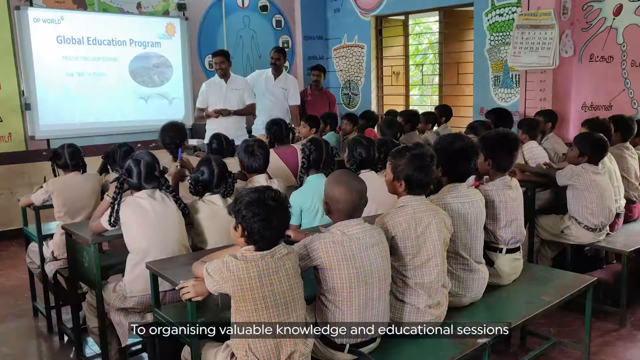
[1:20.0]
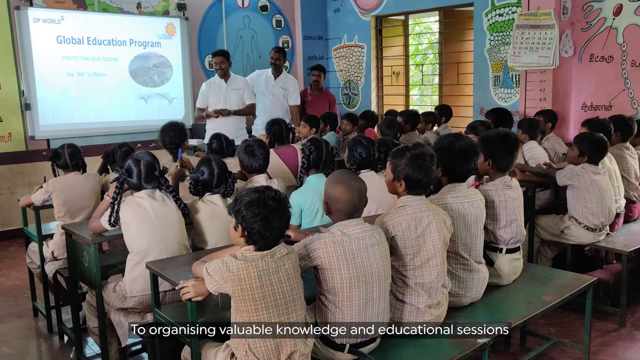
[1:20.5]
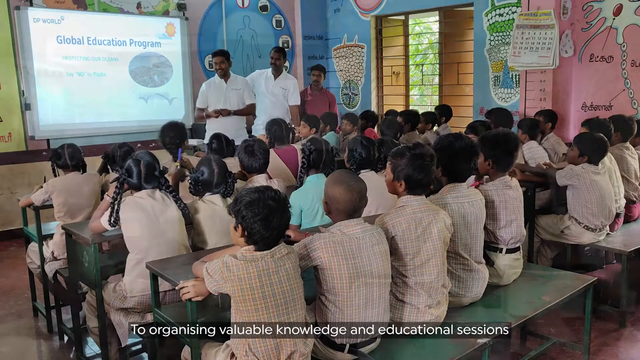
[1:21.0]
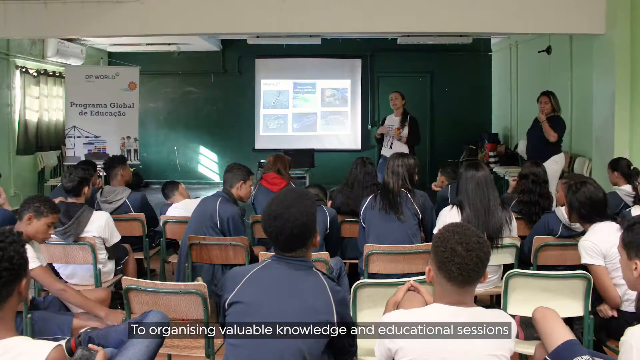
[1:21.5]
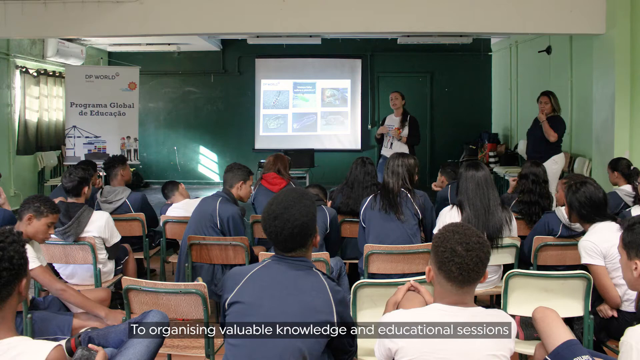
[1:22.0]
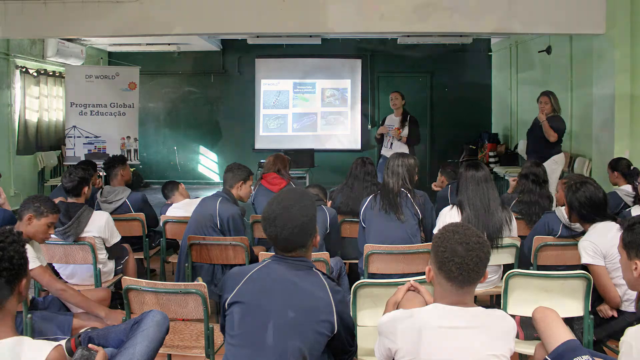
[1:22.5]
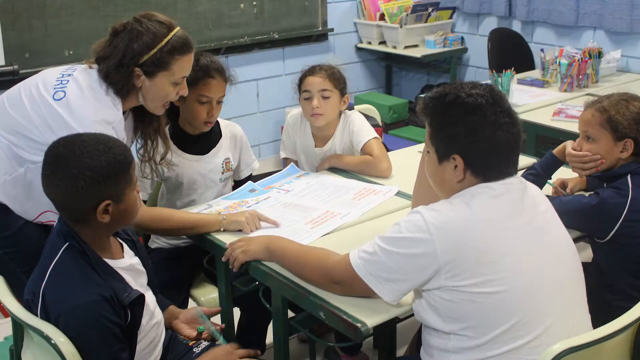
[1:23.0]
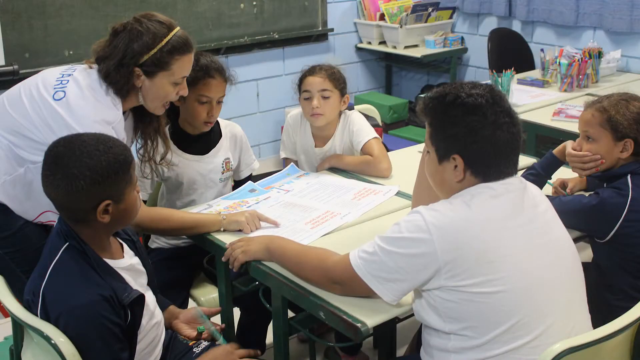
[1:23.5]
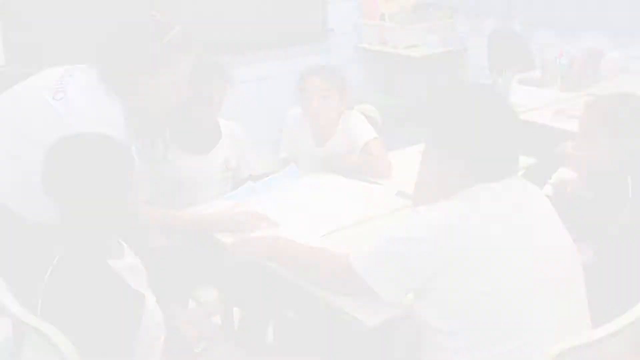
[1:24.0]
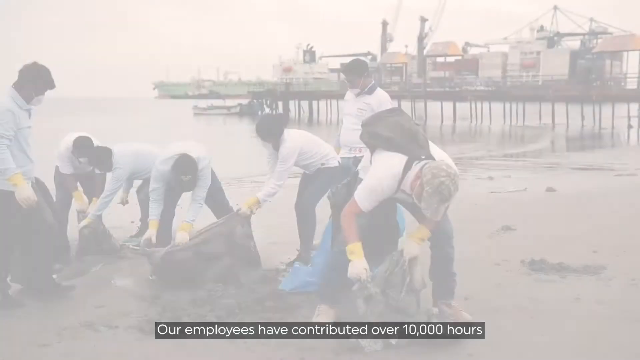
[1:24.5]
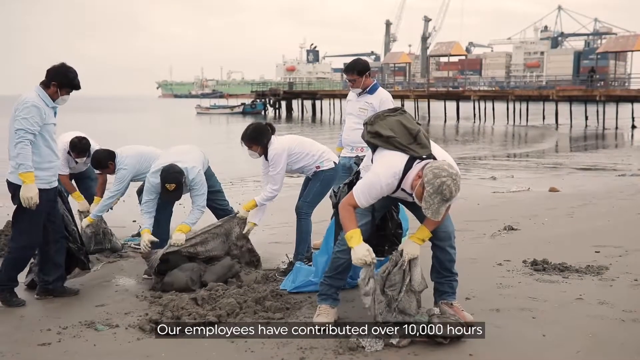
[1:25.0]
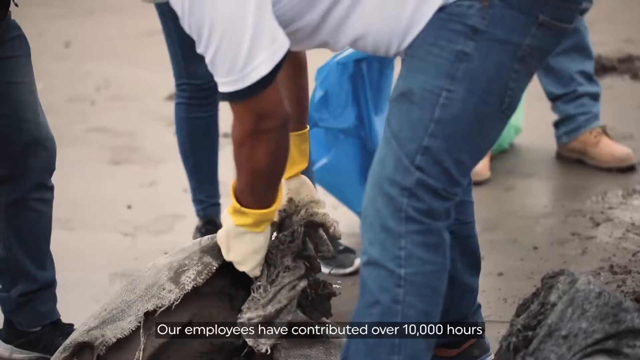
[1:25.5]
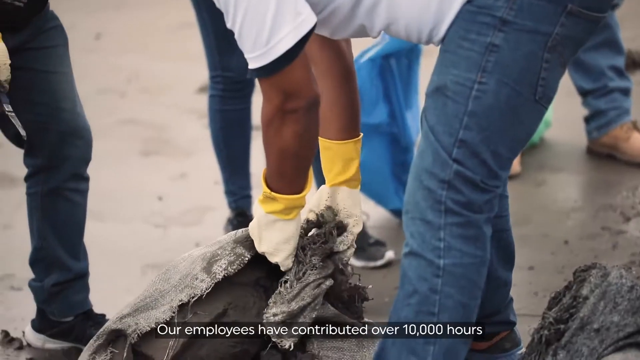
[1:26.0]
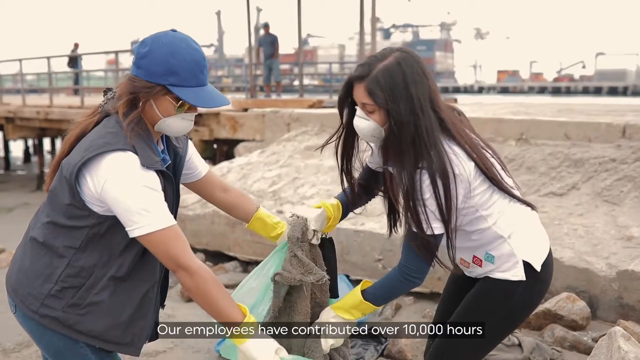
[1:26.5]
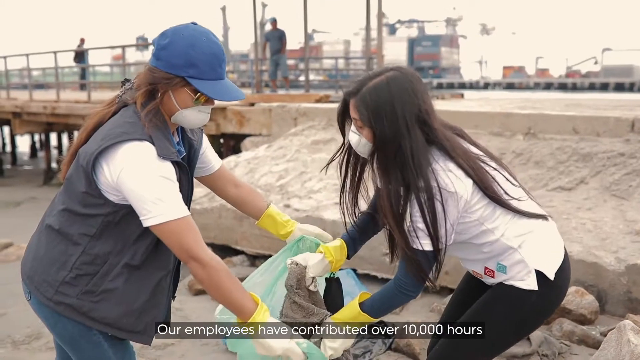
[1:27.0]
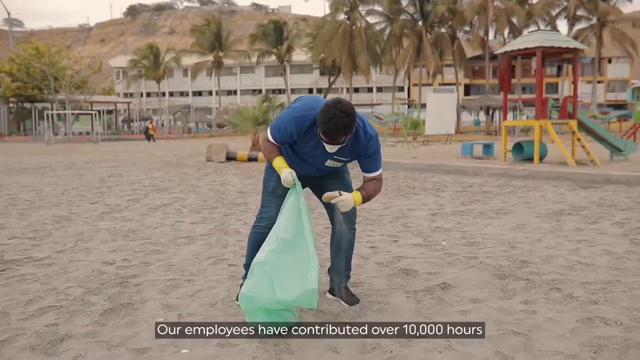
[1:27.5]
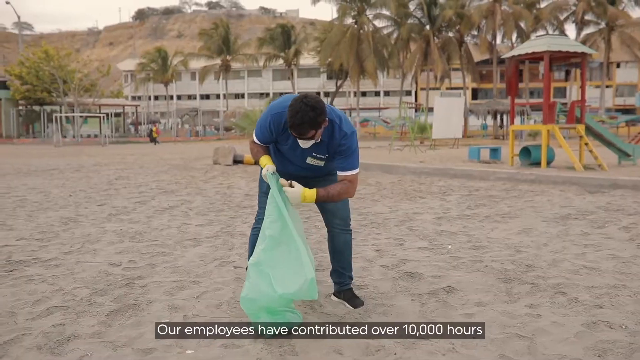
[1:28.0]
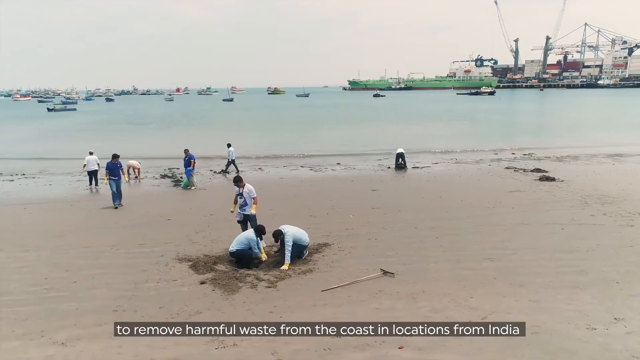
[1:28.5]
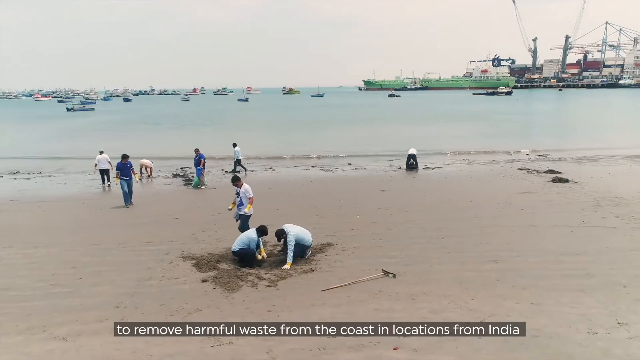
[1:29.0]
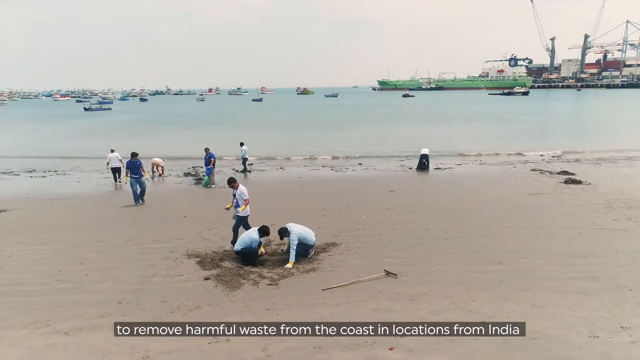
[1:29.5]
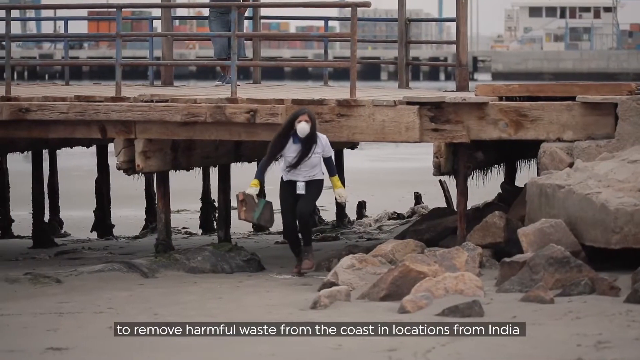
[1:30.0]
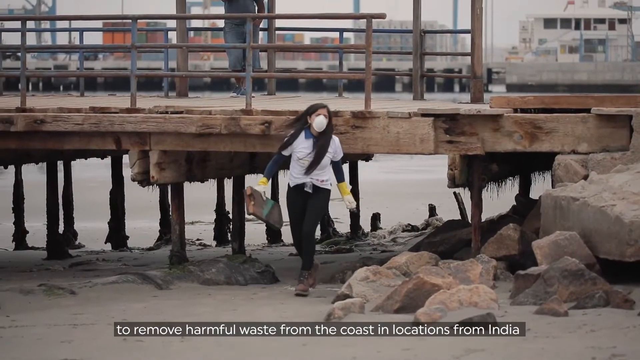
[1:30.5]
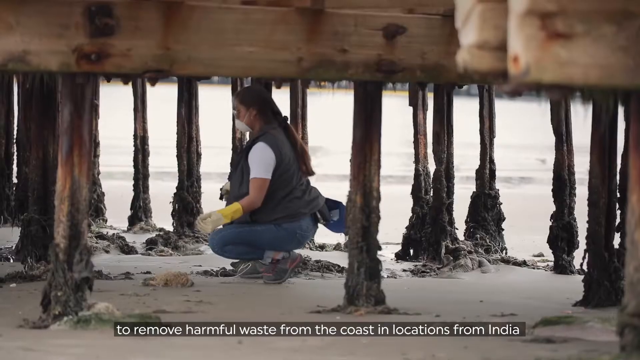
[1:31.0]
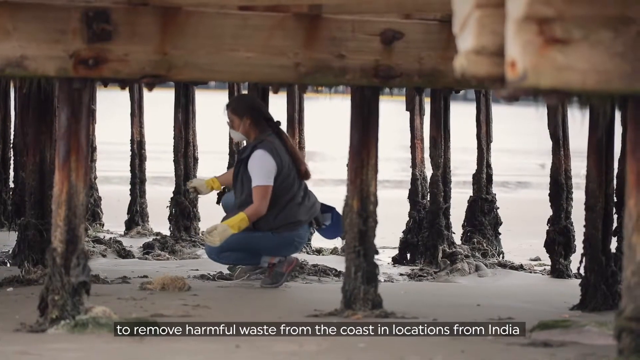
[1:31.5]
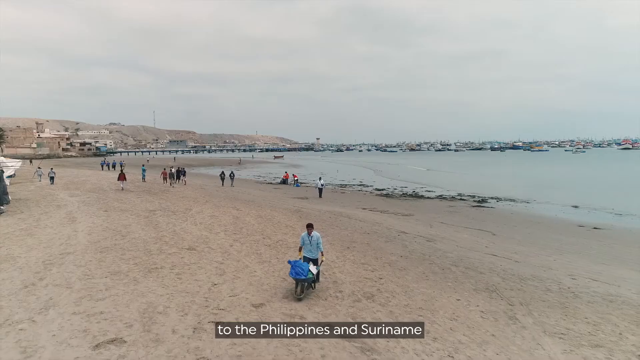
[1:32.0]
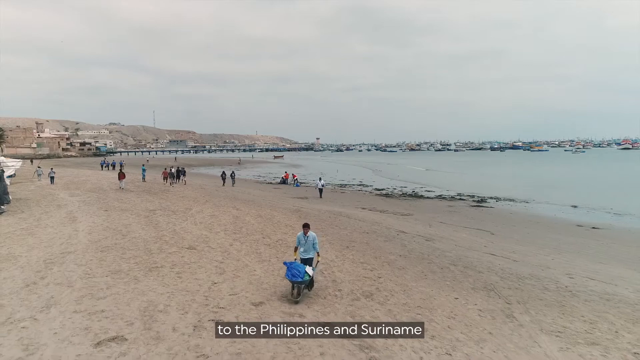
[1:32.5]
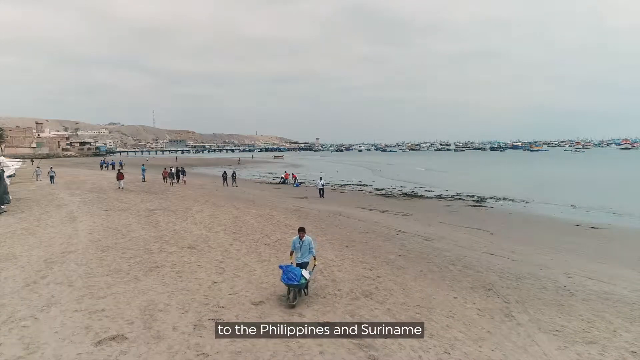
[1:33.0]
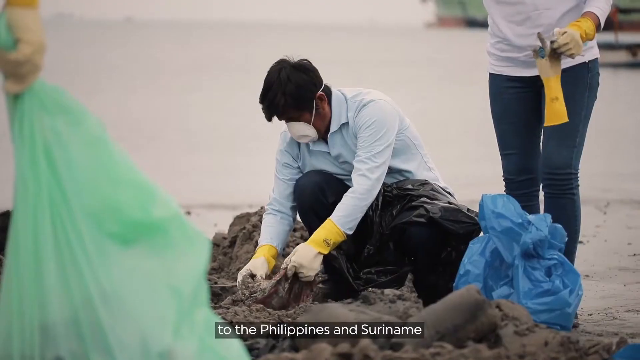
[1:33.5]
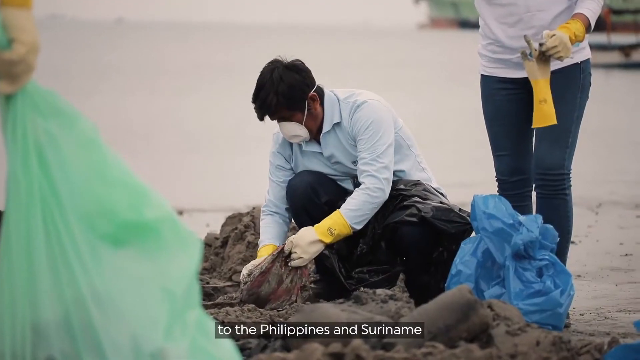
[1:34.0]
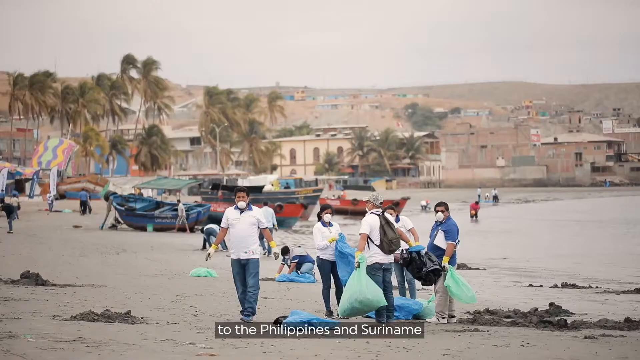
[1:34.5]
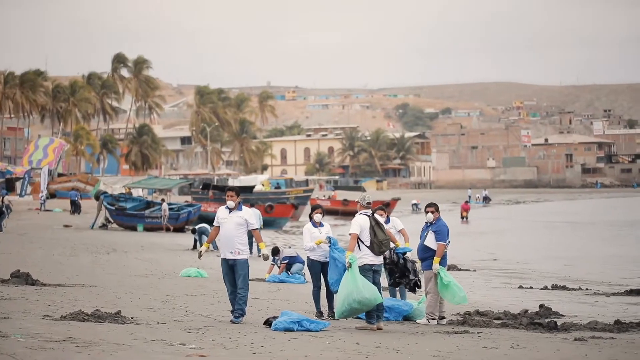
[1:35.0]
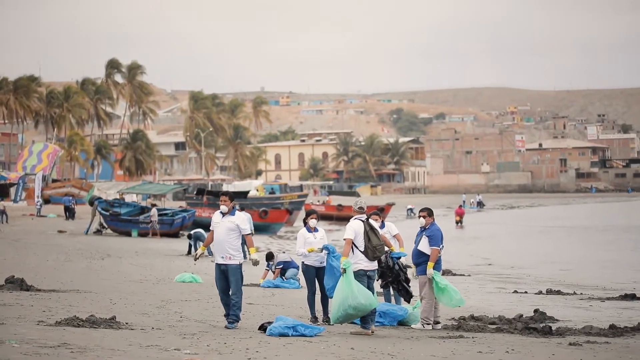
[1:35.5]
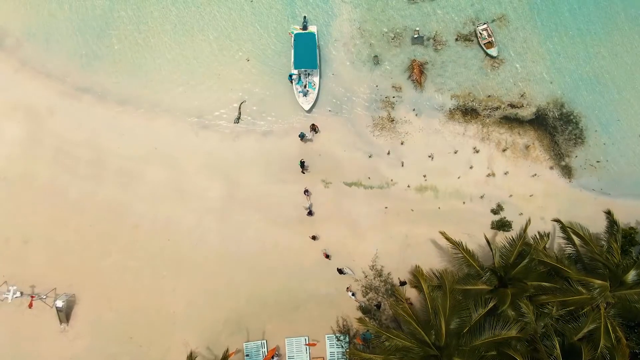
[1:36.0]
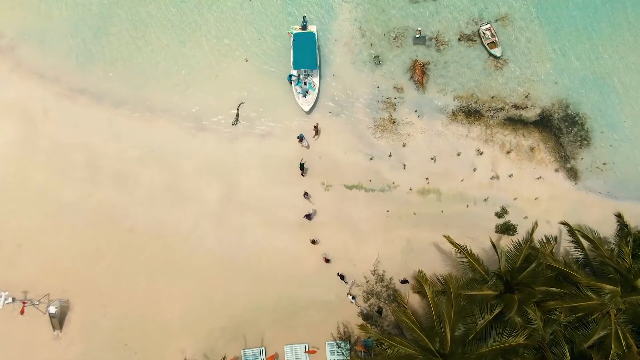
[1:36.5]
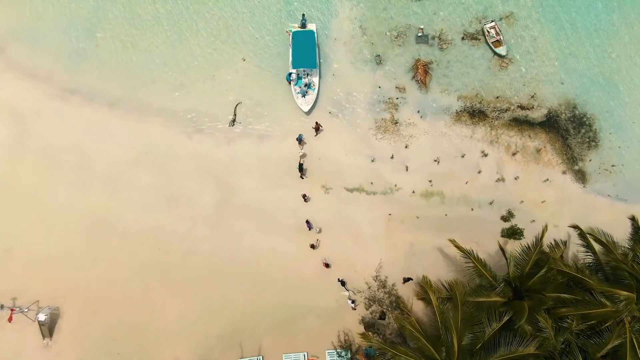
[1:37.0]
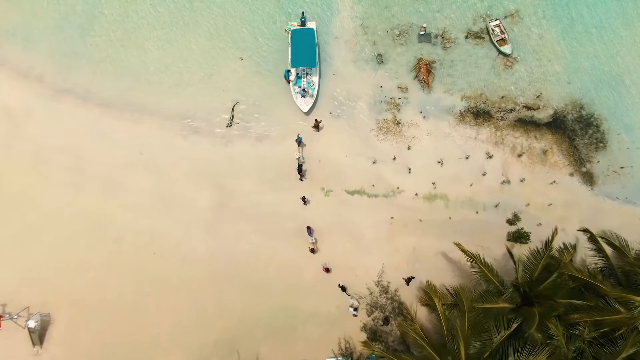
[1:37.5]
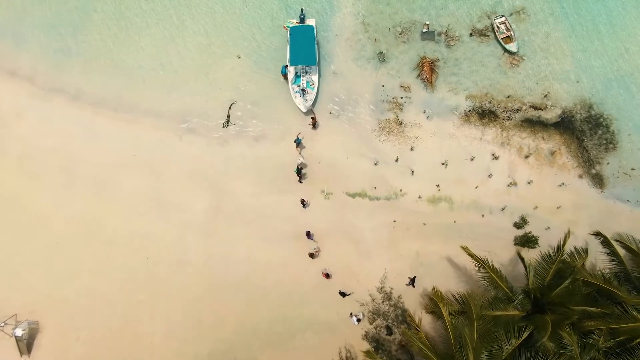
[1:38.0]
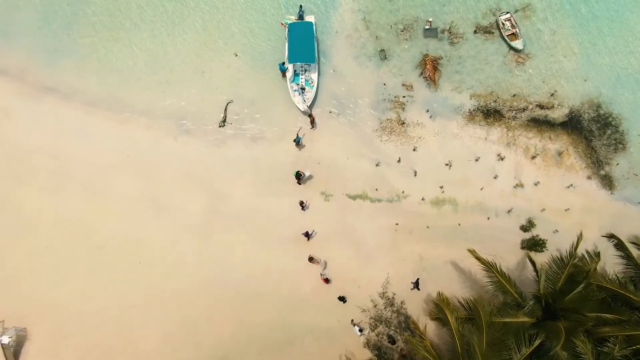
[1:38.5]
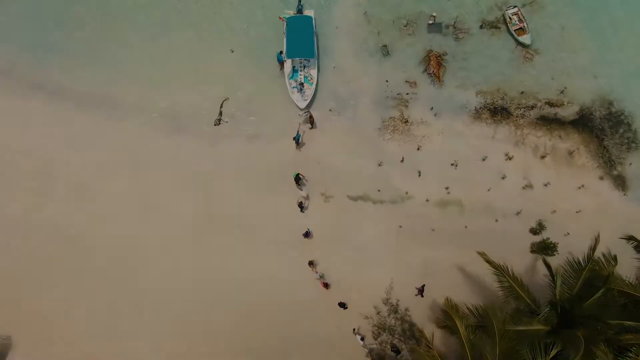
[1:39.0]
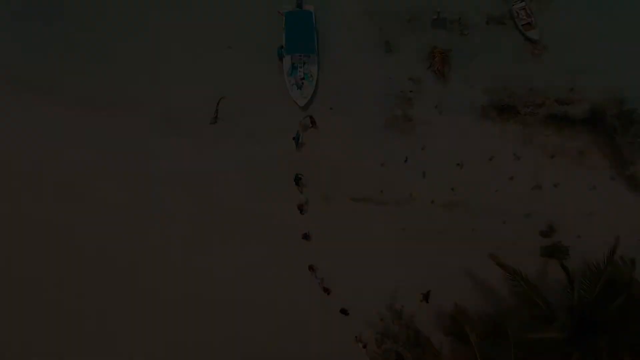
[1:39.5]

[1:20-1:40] In a classroom, three teachers stand by a slideshow reading "Global educational program", while rows of children sit at desks watching it. A head-on view of the classroom shows pictures of the seashore on the whiteboard as the children are taught about the sea. A small group of children sit around a table pointing to a piece of artwork. In very quick succession, the children are then on the beach collecting things into bags, with the piers behind them and a teacher present. Several close-up shots show the children wearing masks, seeming to clear something and put it into the bags. At one point they use a rake and dig in the sand, kneeling to dig while others are at the seashore. A little girl comes from underneath the dock, having bent down under it, and stands up straight as she walks towards the camera holding something in her right hand. More children on the beach, too many to describe individually and seemingly in groups, each have a bag and collect things, possibly rubbish. Seen from above, the bags are passed from child to child along a human chain running from the bottom towards the top of the centre of the screen and onto a boat with a blue roof.